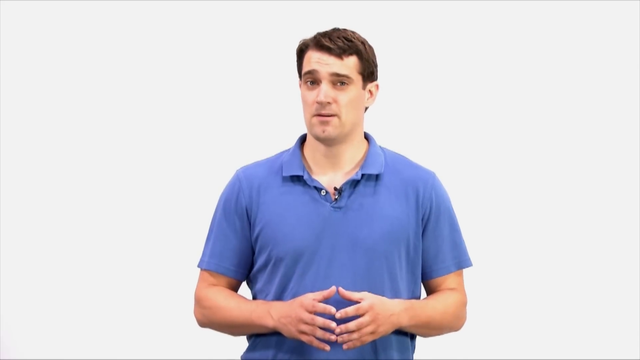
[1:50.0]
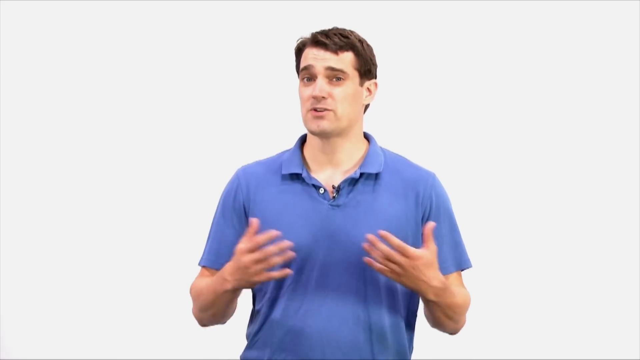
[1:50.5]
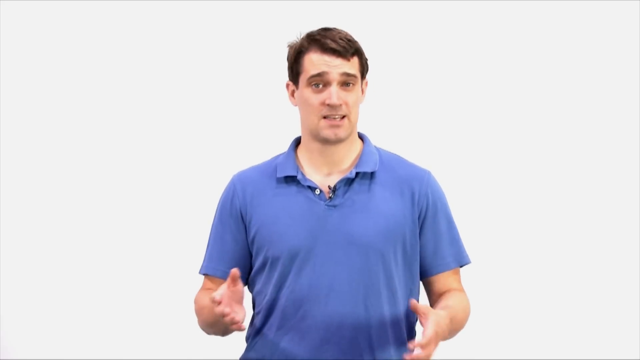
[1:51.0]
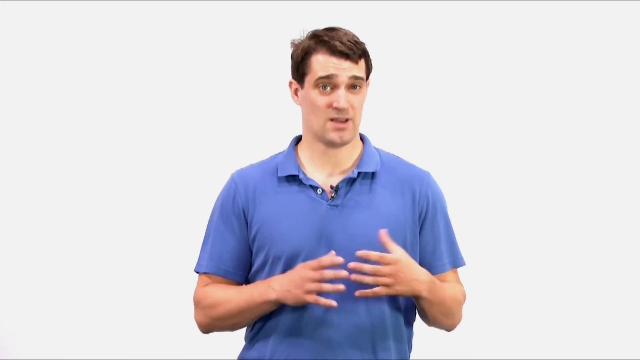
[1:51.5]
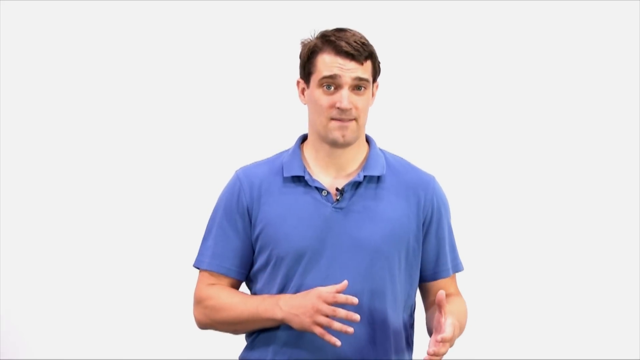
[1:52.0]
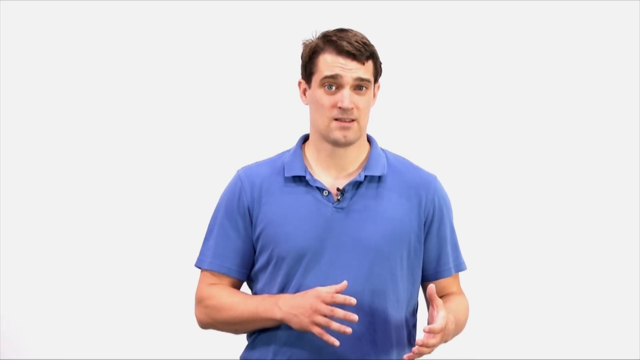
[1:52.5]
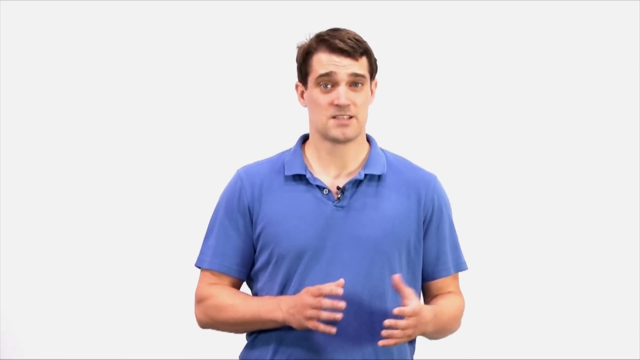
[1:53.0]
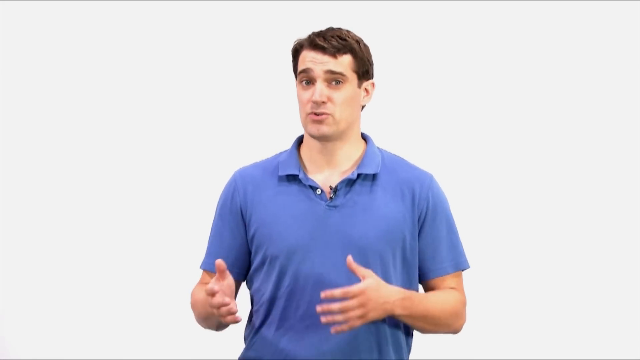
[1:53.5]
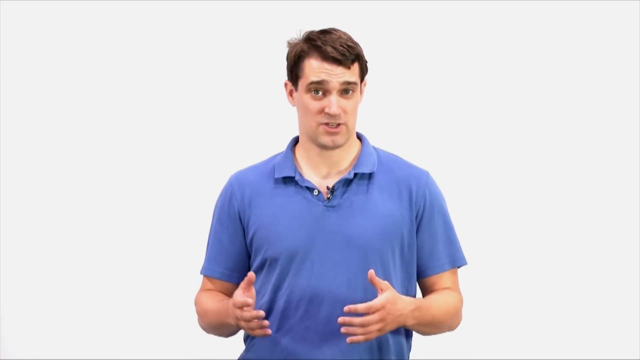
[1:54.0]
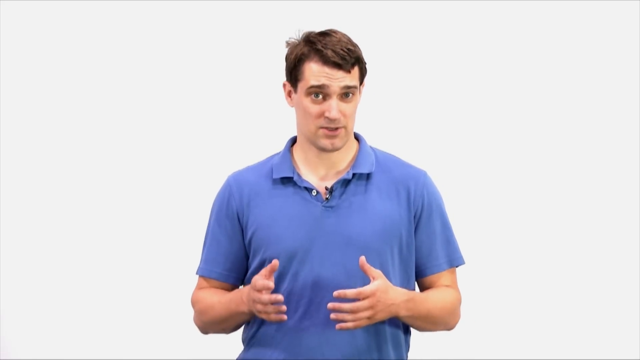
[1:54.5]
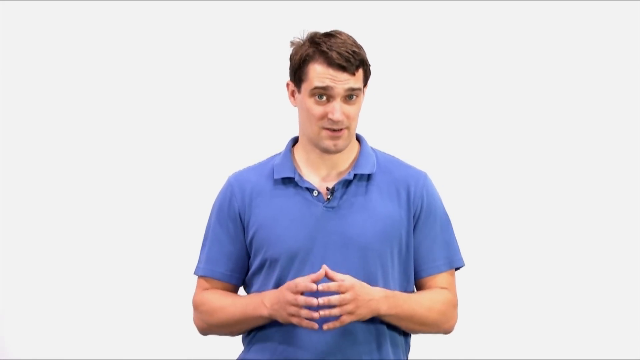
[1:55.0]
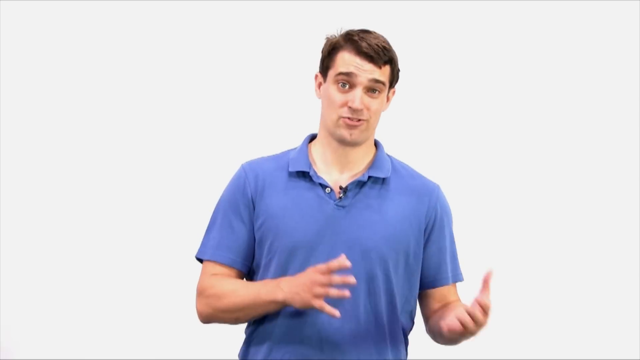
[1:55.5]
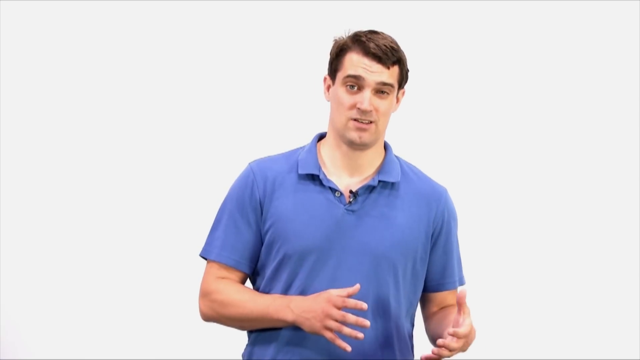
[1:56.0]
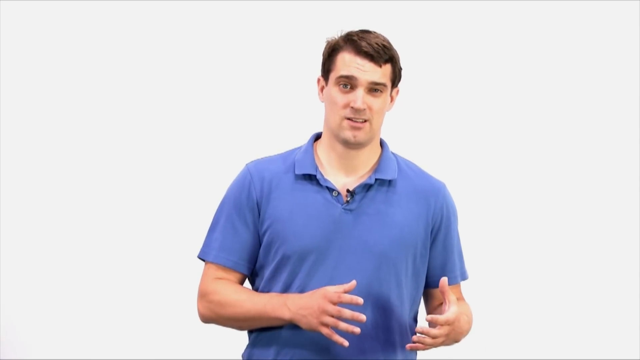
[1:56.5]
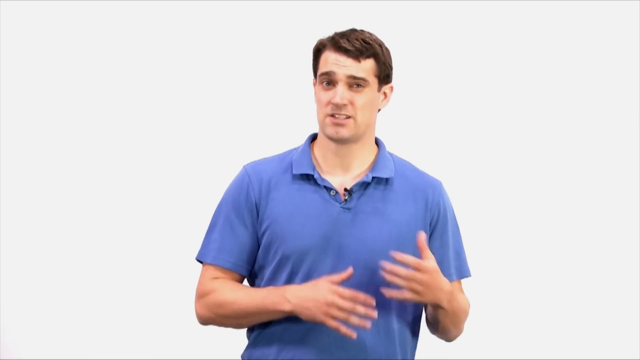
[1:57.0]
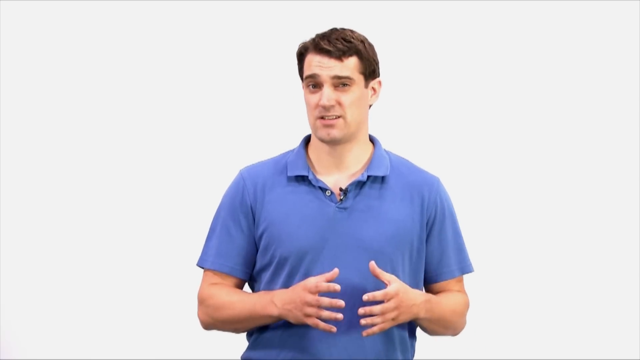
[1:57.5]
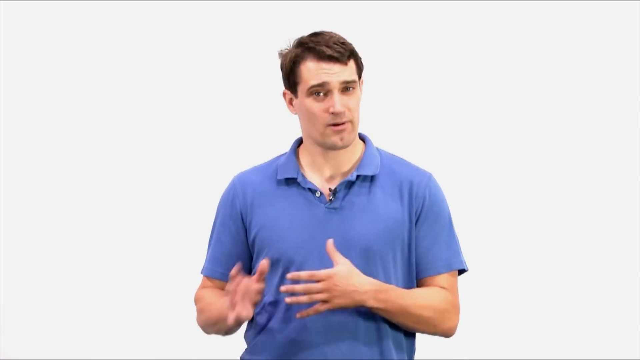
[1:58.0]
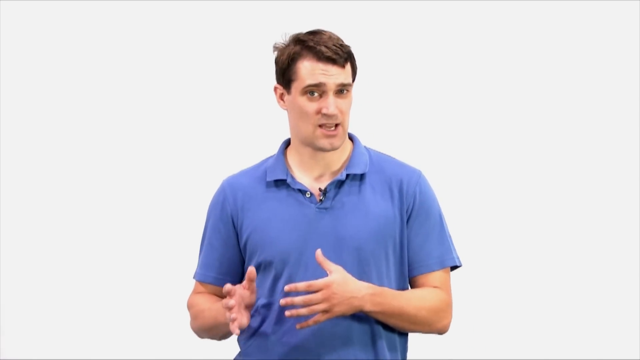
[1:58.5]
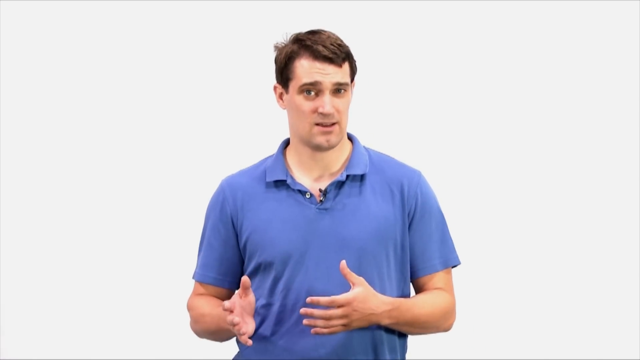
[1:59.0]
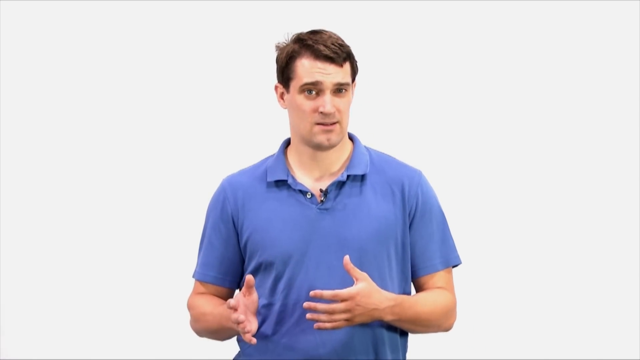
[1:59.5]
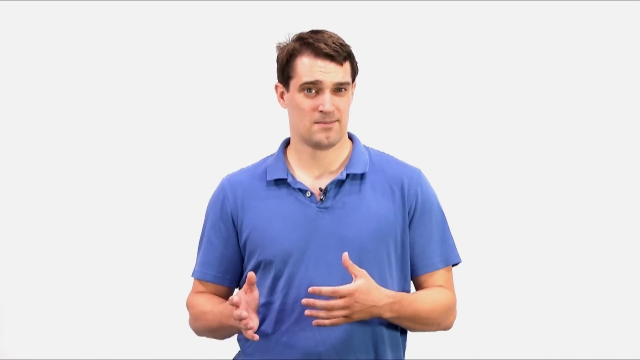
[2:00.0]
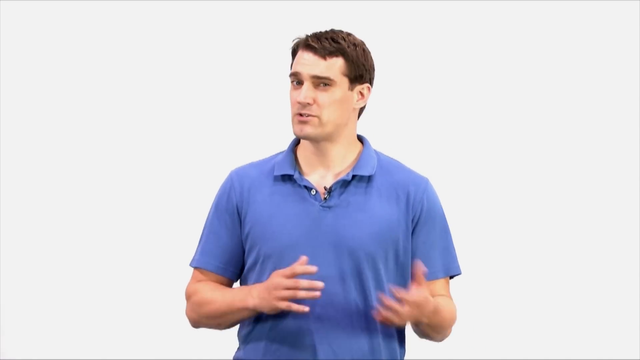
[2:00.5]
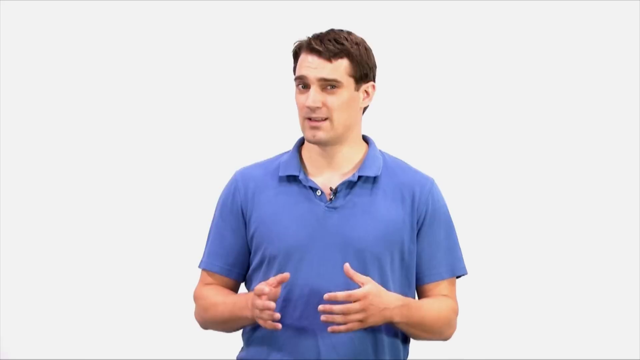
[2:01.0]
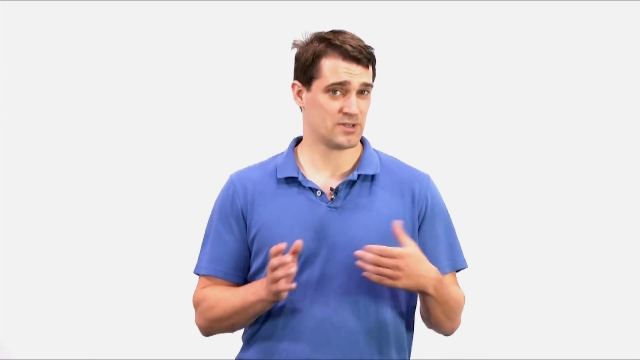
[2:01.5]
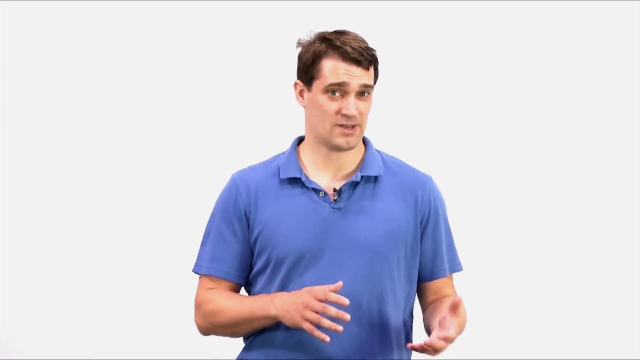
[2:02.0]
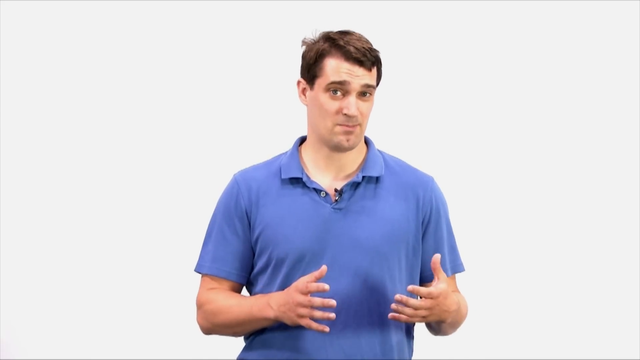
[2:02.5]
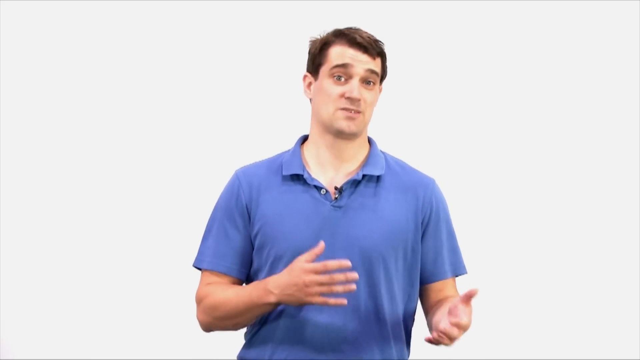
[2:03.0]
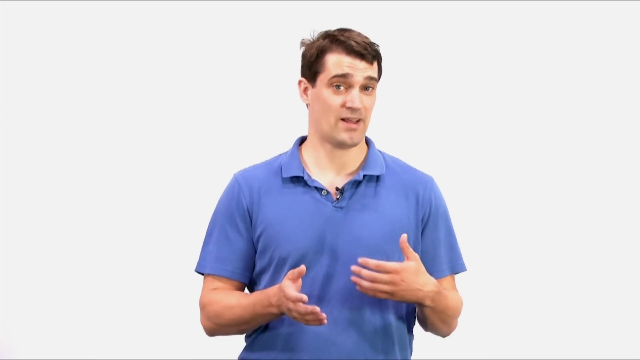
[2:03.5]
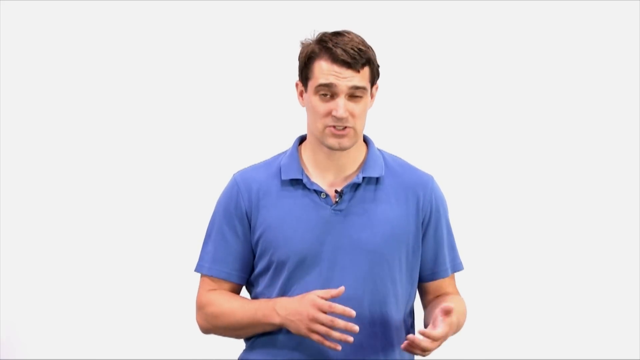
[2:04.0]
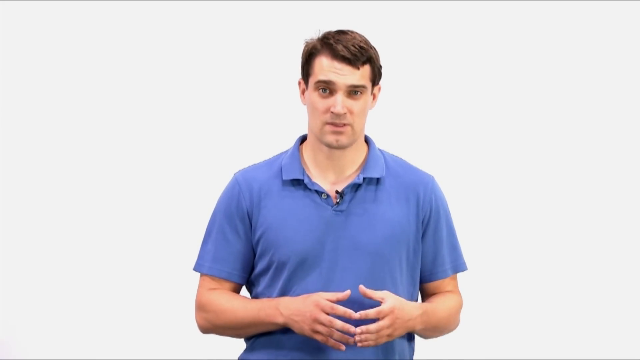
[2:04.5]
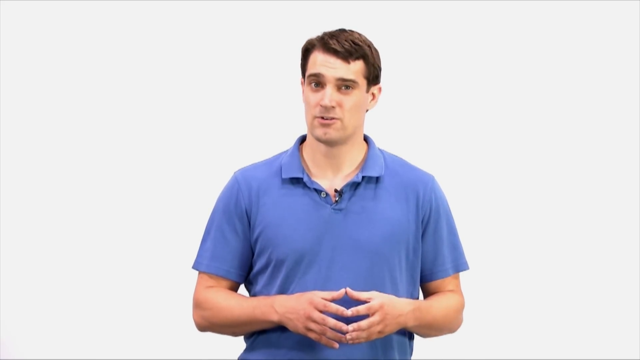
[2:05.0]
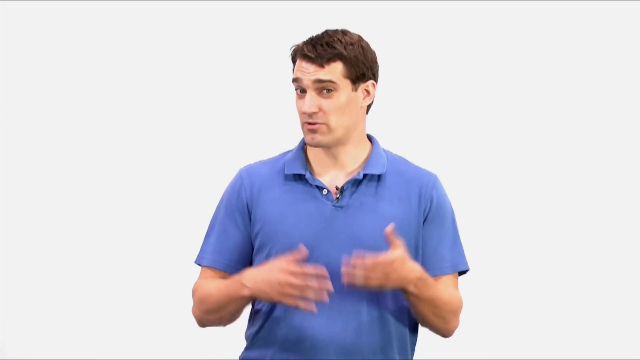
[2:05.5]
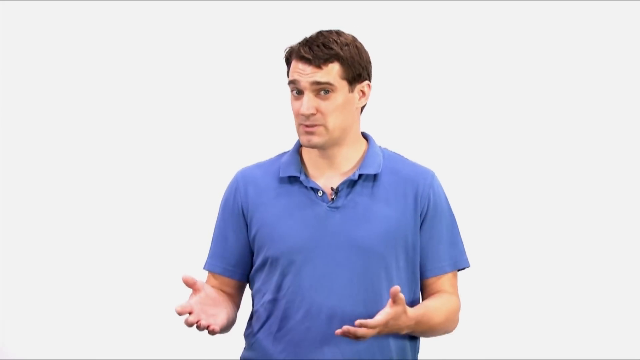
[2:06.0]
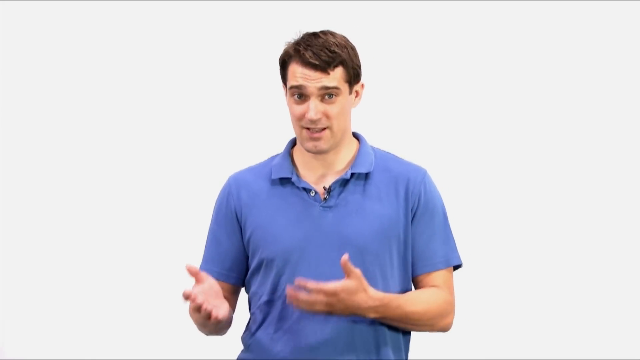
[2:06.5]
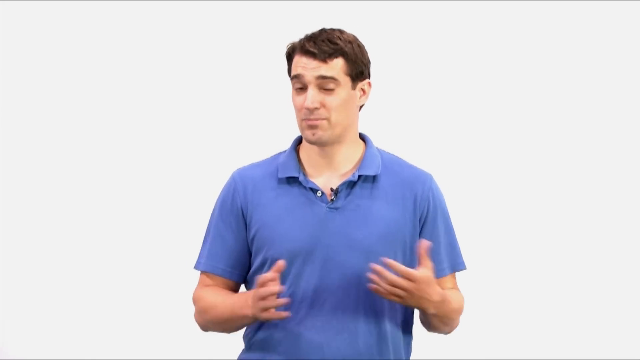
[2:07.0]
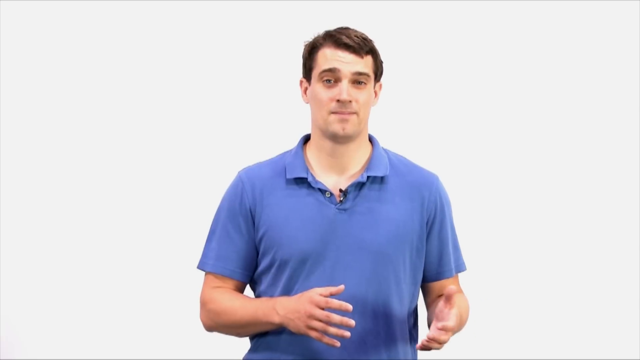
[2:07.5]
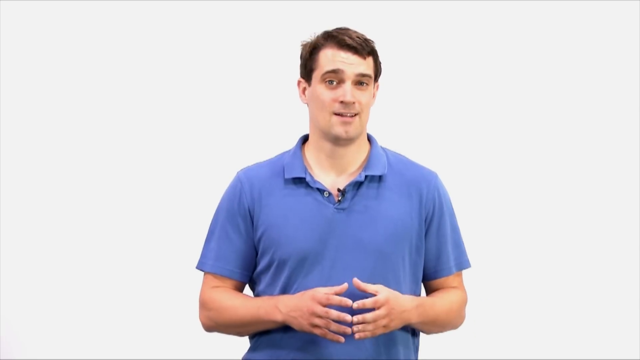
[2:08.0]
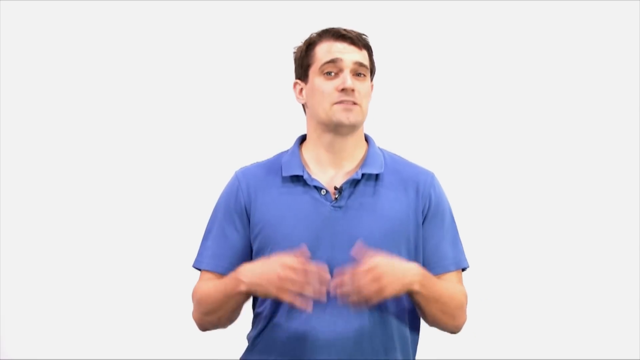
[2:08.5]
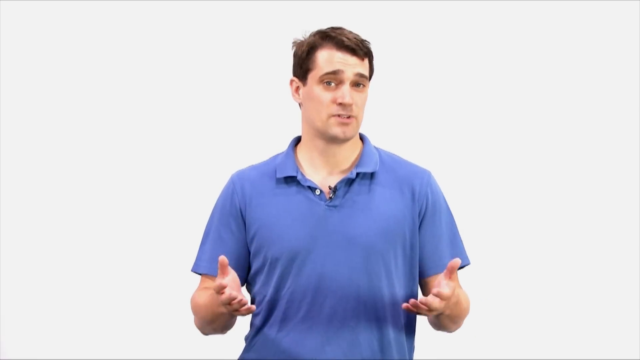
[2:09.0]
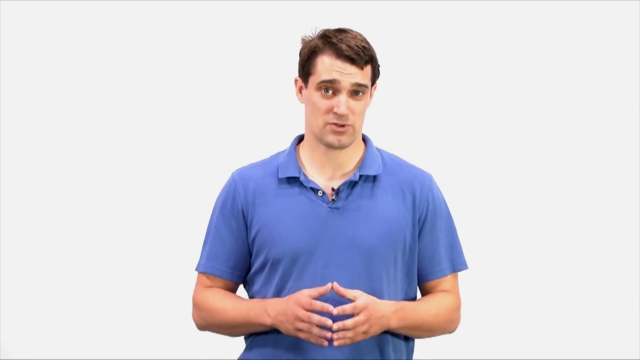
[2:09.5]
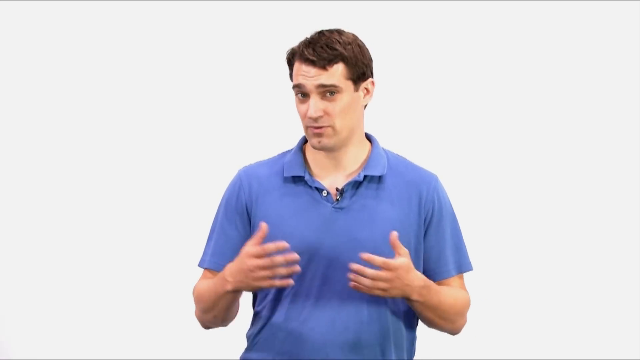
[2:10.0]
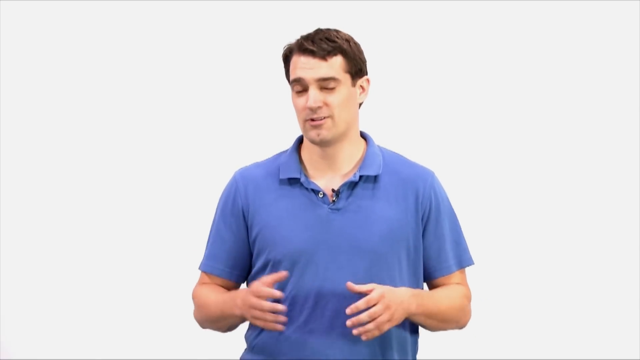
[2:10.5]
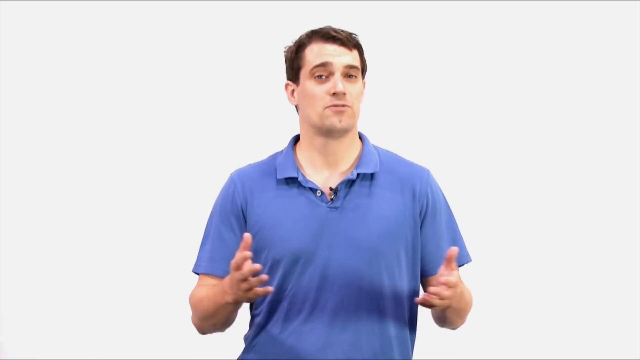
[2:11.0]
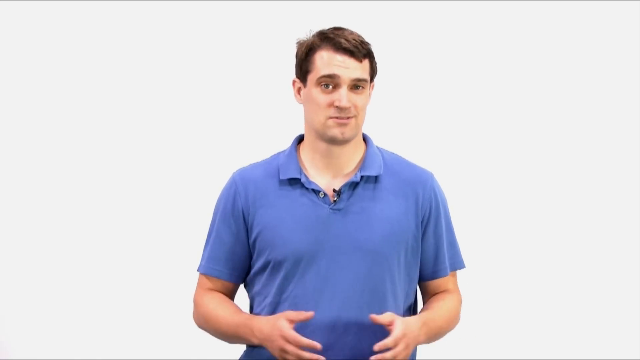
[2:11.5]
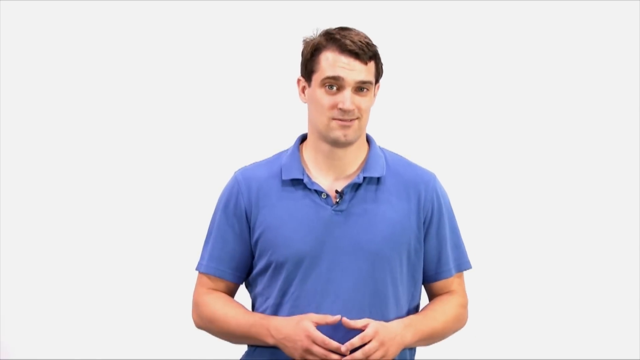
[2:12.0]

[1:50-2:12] A man stands in a room with a plain white background, visible from the torso upwards. He wears a plain light blue polo shirt with a black microphone attached to it. He has short brown hair and looks to be in his 30s or early 40s. He talks directly towards the camera with a neutral expression. His hands are out in front of him, not clasped together, and he moves them back and forth from left to right, as if talking about two sides of a situation. His hands do not drop from in front of him.